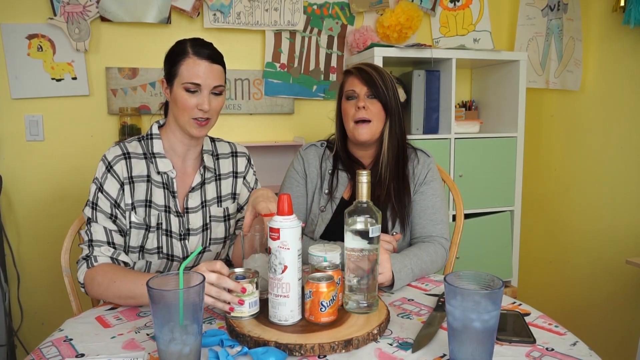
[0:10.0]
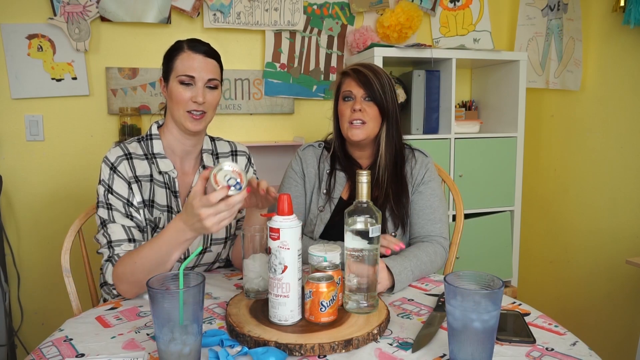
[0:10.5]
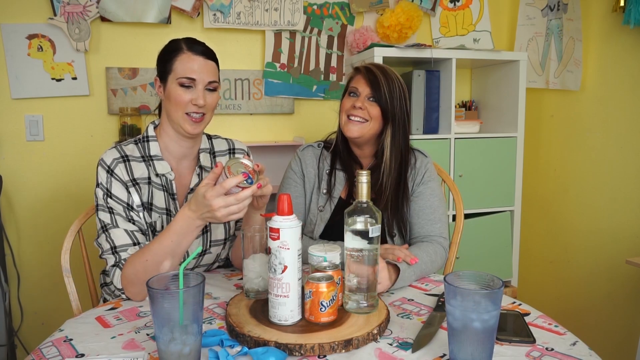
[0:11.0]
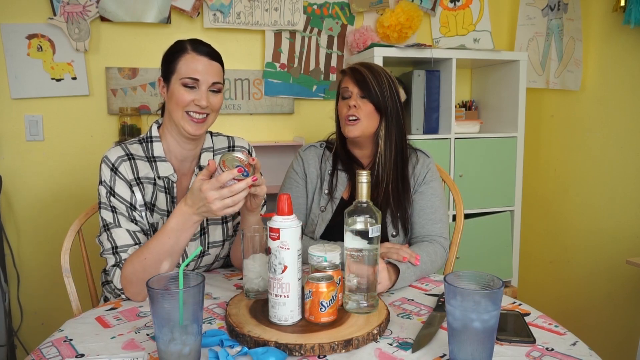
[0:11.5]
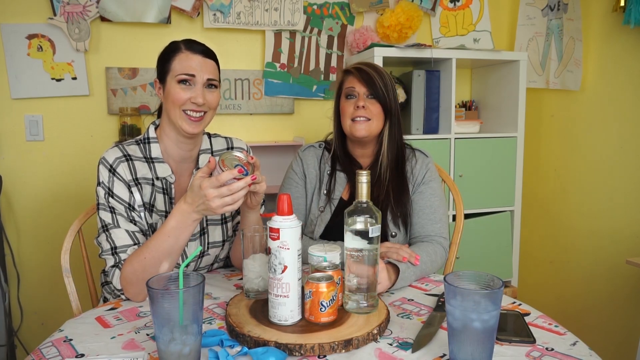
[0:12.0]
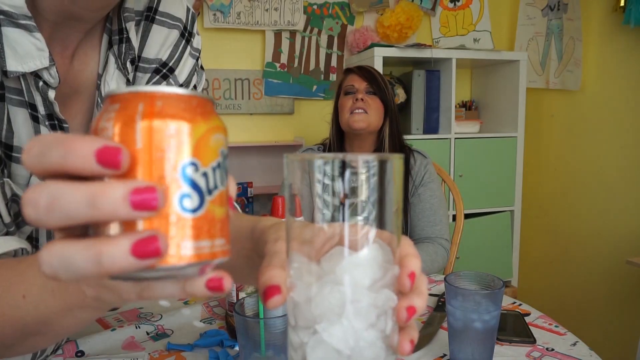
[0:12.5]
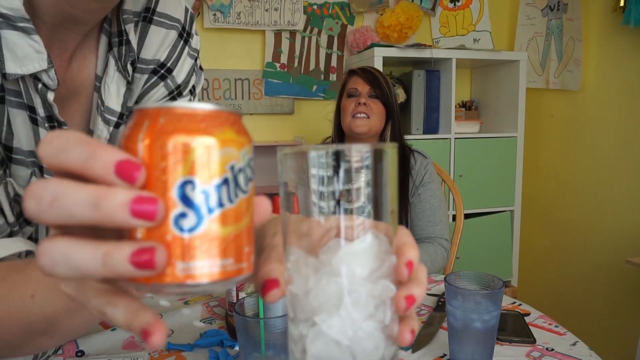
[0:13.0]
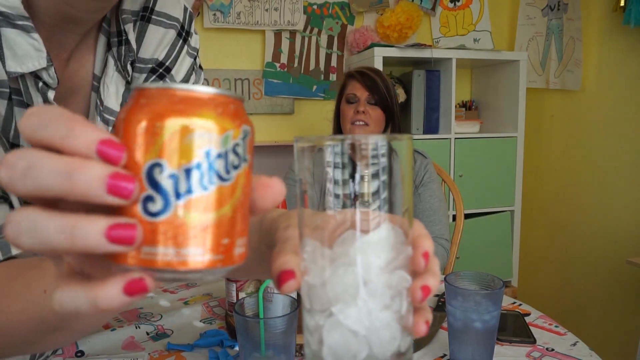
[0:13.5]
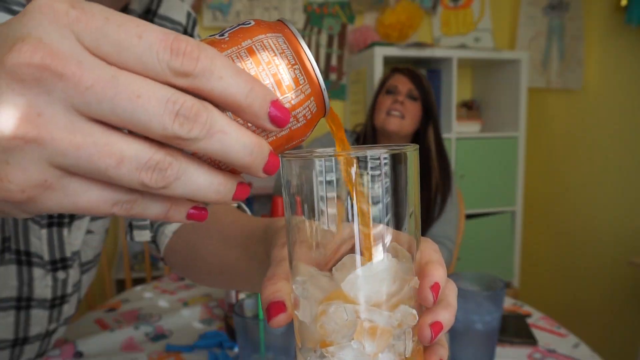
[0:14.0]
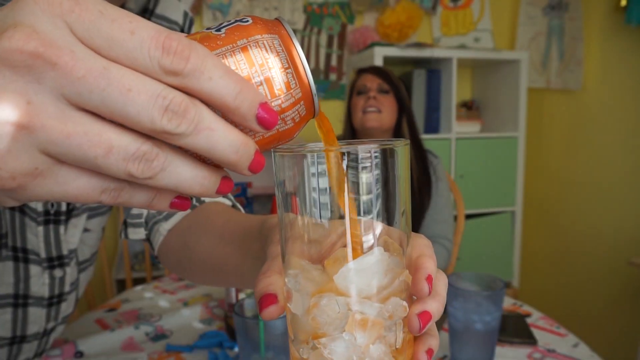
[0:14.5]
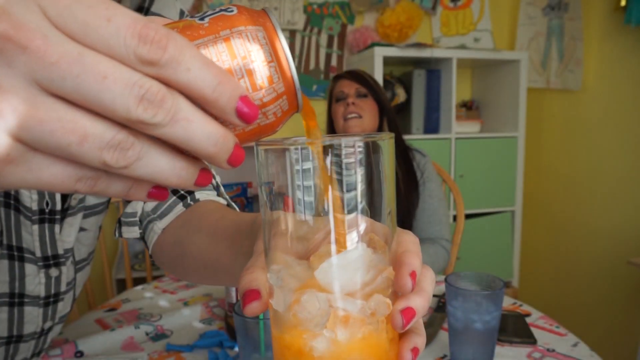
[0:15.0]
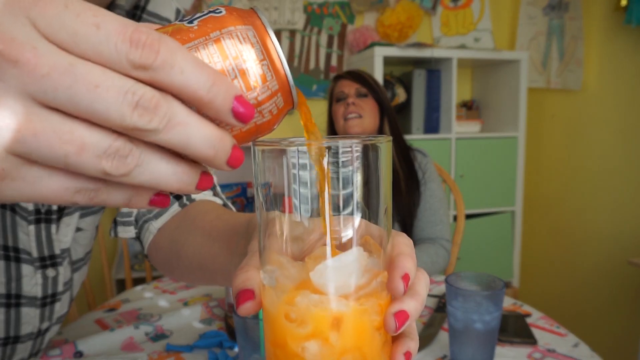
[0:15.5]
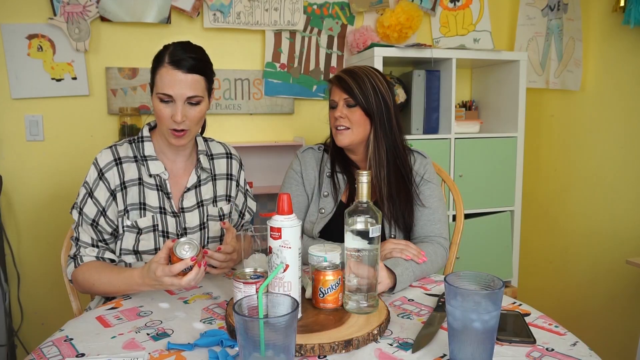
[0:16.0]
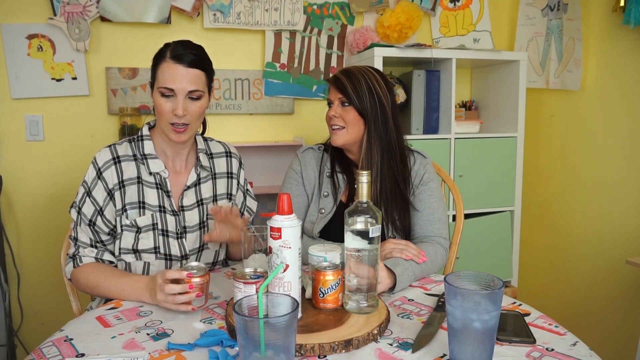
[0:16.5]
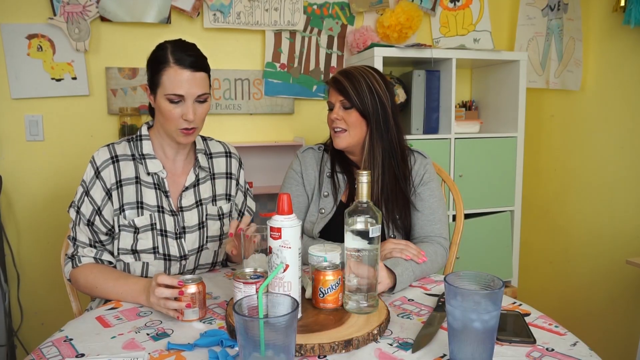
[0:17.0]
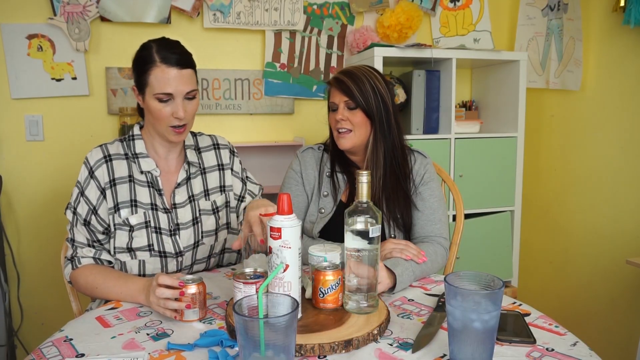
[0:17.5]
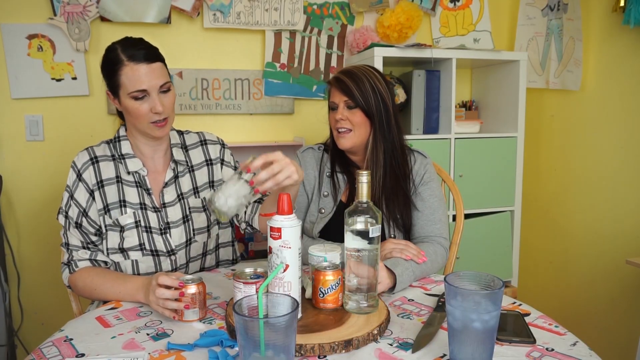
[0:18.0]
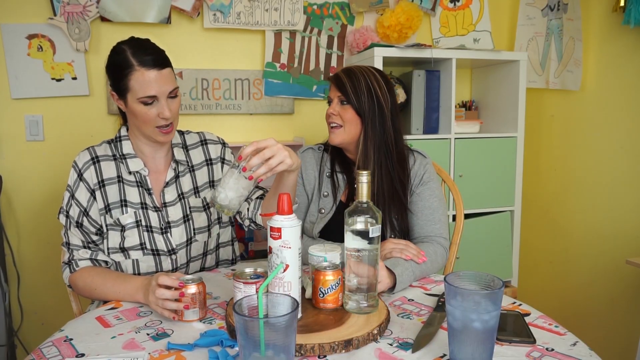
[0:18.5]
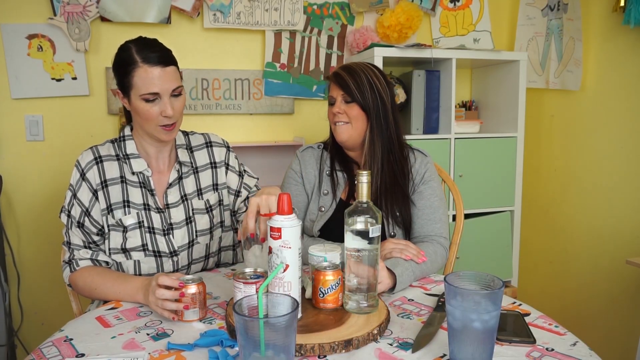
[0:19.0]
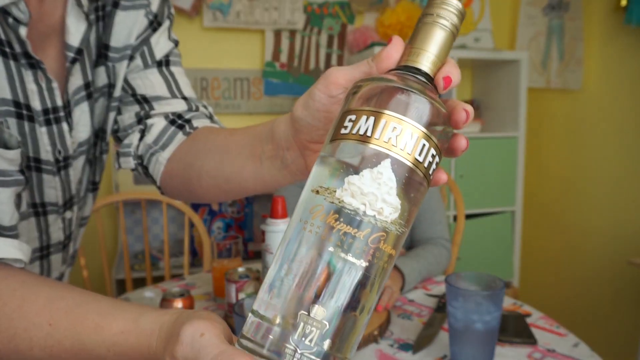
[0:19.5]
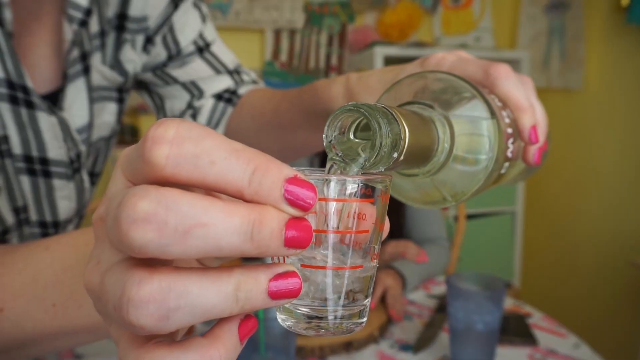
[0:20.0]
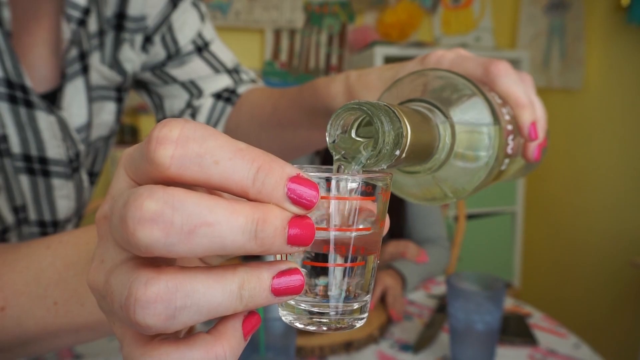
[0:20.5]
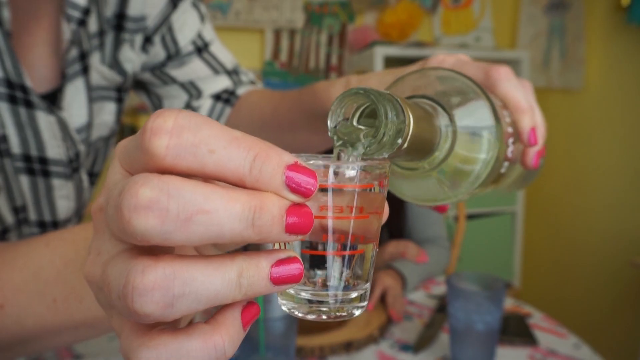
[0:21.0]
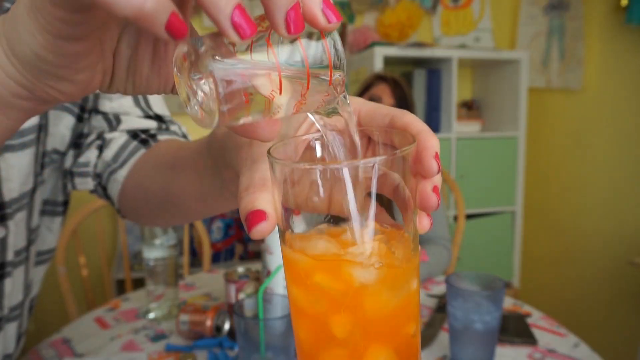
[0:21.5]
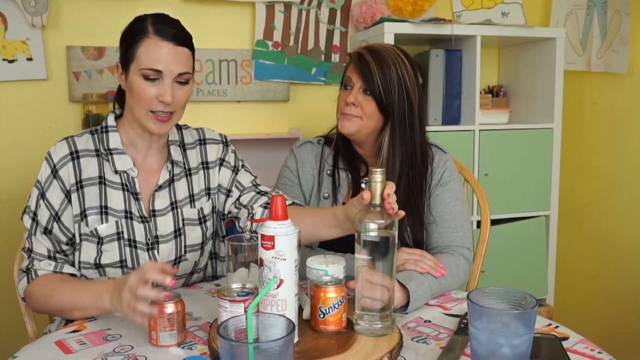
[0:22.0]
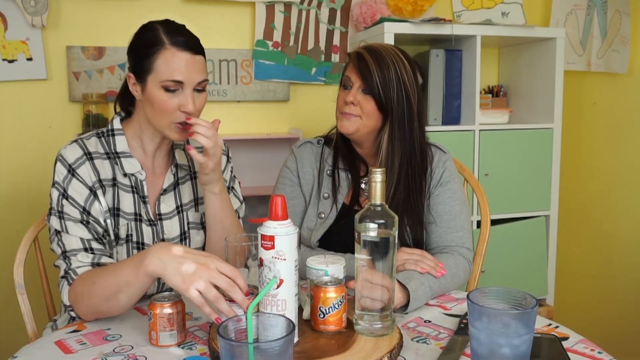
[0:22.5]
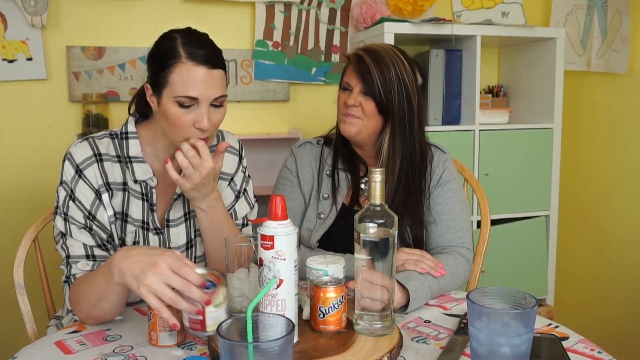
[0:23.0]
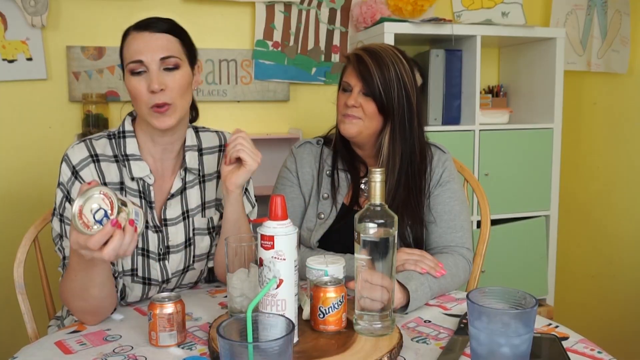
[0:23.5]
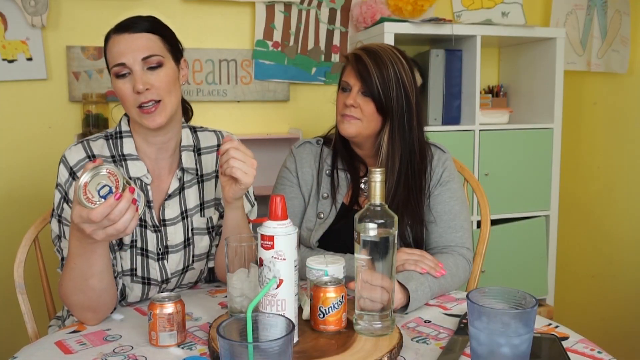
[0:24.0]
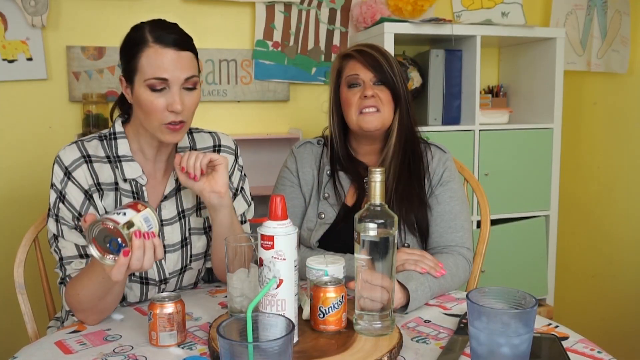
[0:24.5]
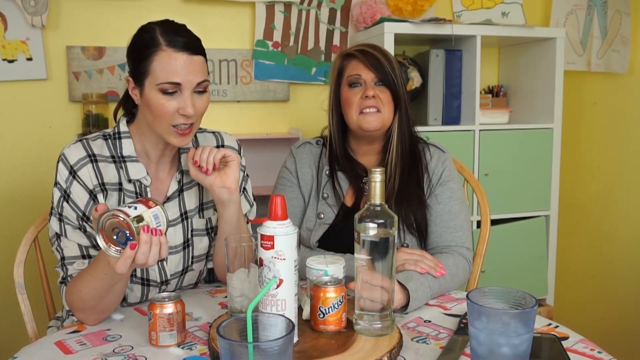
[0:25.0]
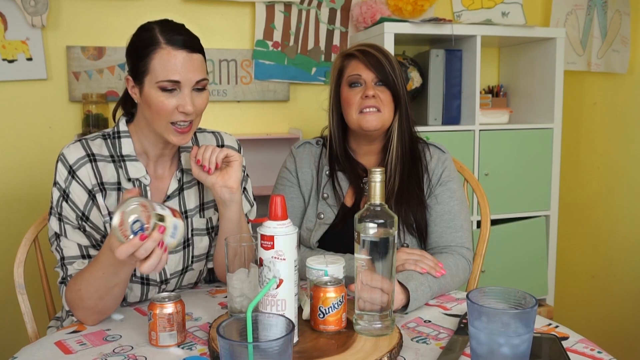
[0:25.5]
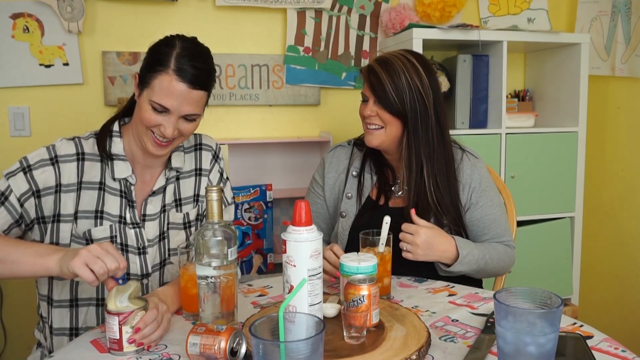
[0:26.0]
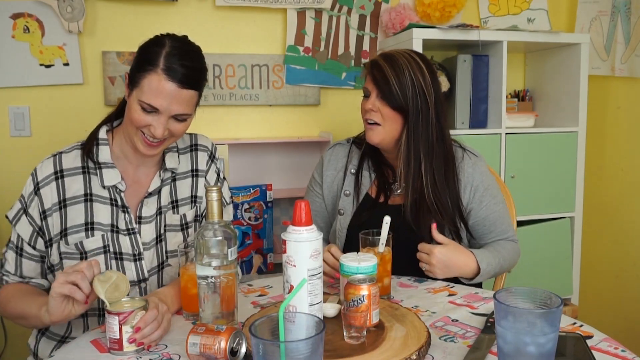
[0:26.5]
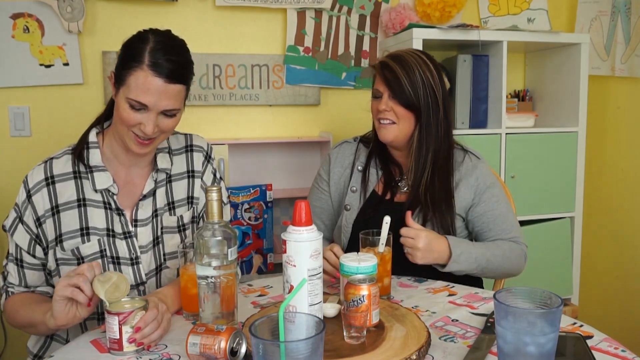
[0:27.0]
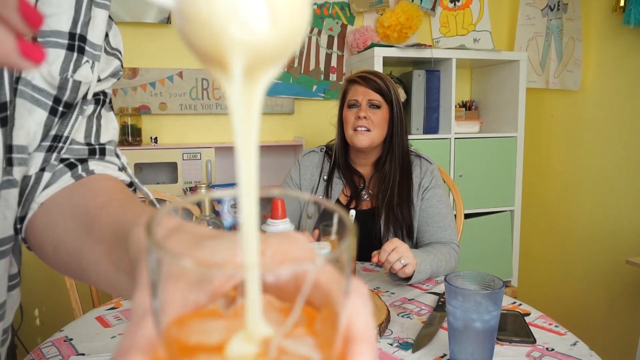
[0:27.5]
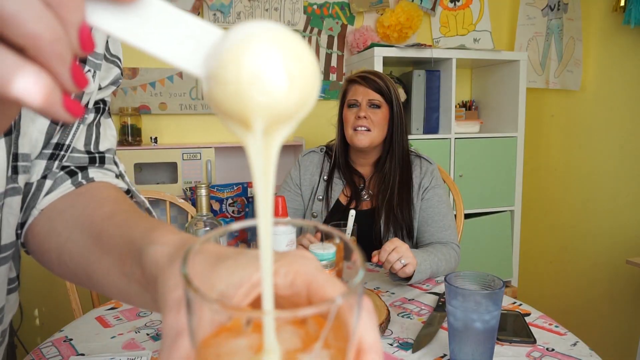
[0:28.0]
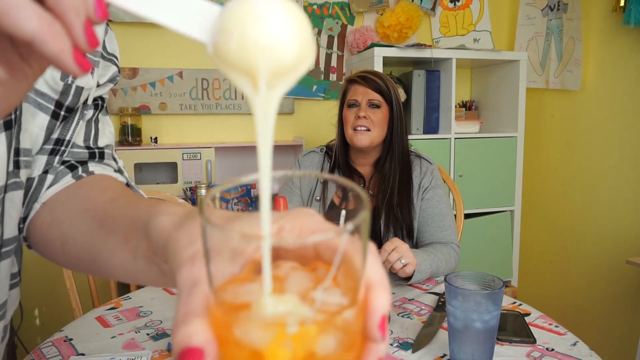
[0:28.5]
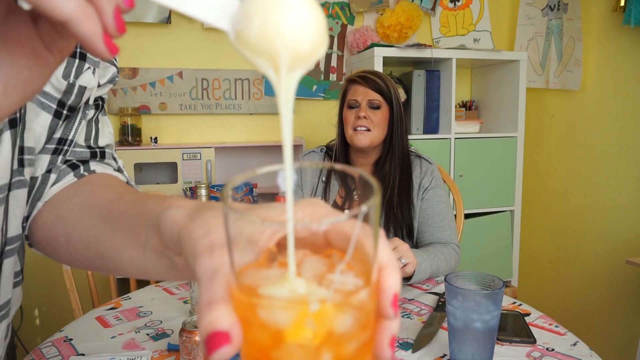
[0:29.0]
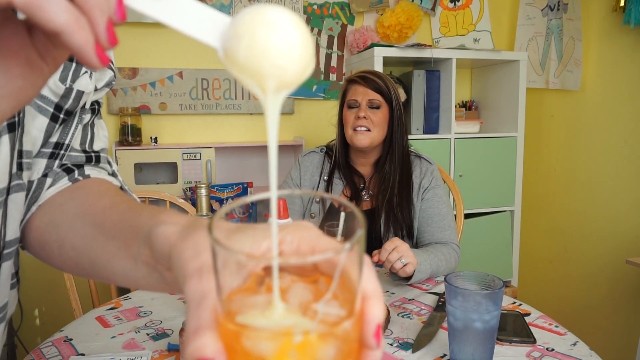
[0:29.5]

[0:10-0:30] Both women continue to sit at the table. The background is full of colors, including yellow walls, green and white cabinets, and drawings on the wall that possibly appear to have been made by children. Both women appear to be trying some type of drink. One woman picks up a very small can of Sunkist orange and pours the soda into a somewhat small glass with a lot of ice in it; her nails appear to be a pinkish-red color. The woman in the background looks on eagerly while the other keeps pouring, and then the shot returns to both of them sitting at the table together. The woman in the checkered shirt shows Smirnoff to the camera, puts some of the liquid into what looks like a shot glass, and then adds it to the glass of Sunkist she has just poured. Next, they open a can that looks almost like cake topping and begin putting it in the glass.